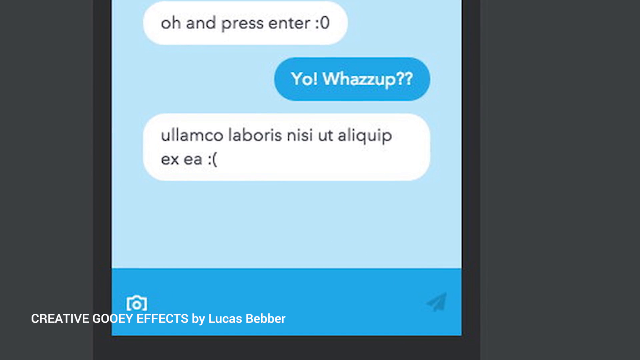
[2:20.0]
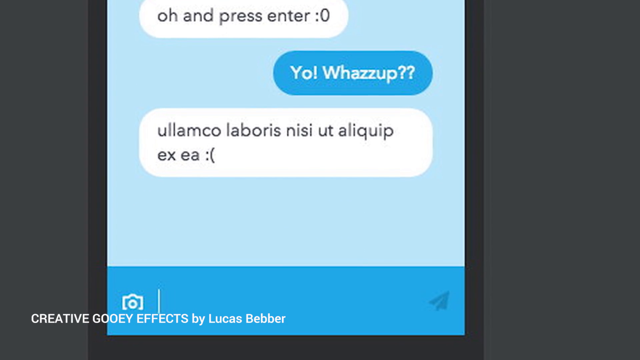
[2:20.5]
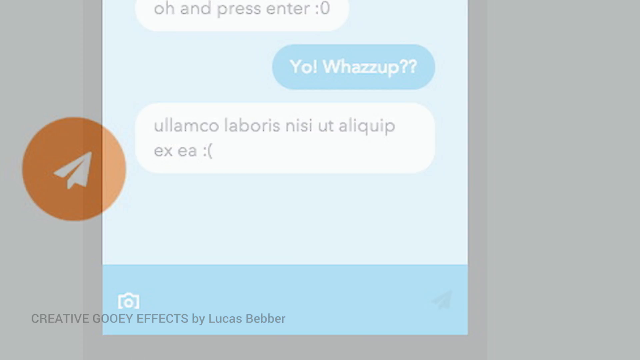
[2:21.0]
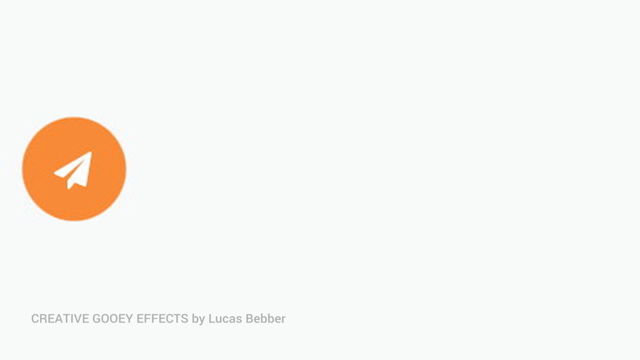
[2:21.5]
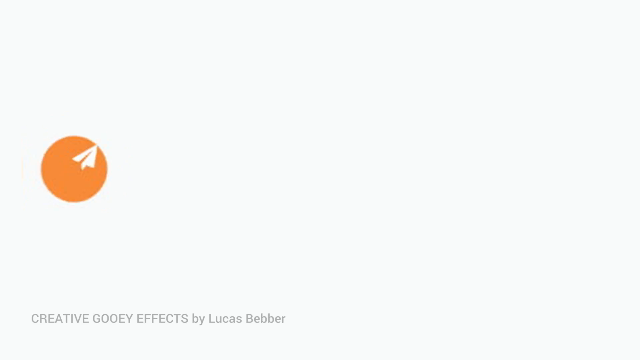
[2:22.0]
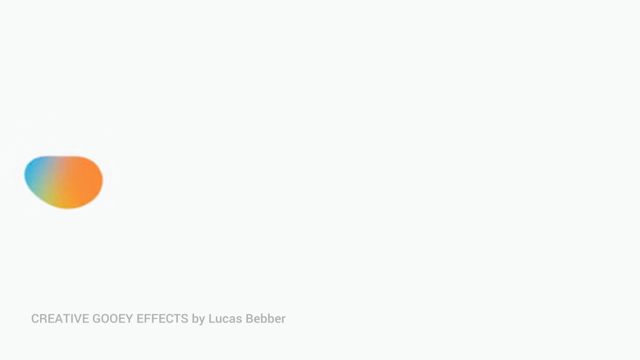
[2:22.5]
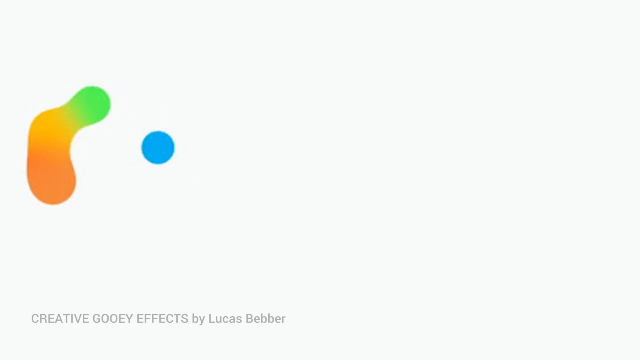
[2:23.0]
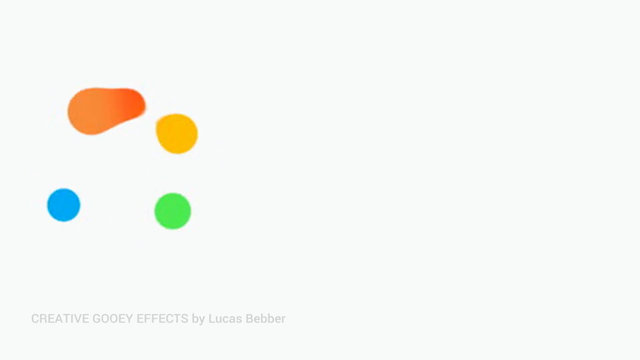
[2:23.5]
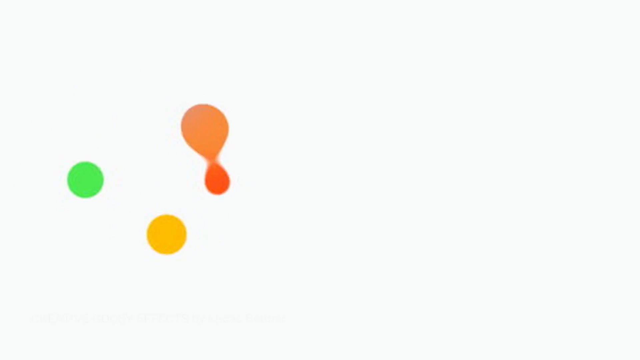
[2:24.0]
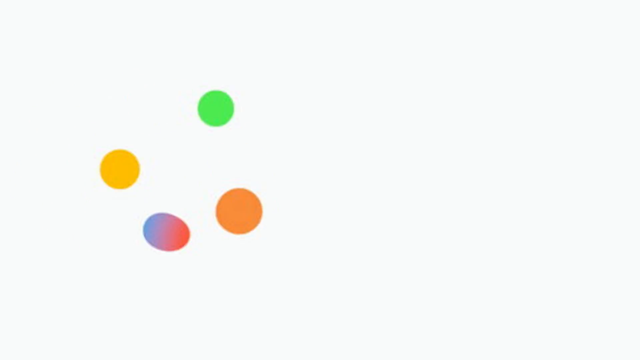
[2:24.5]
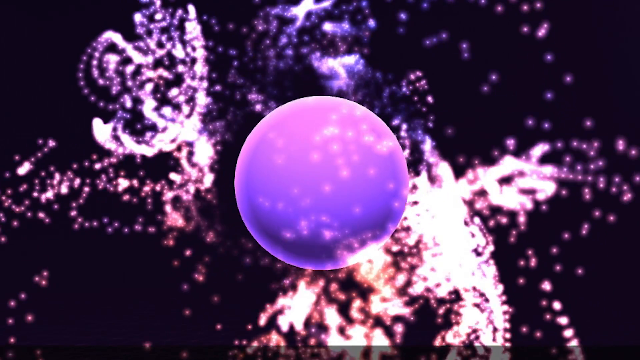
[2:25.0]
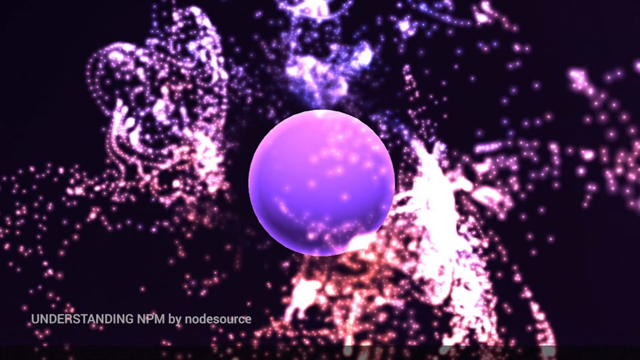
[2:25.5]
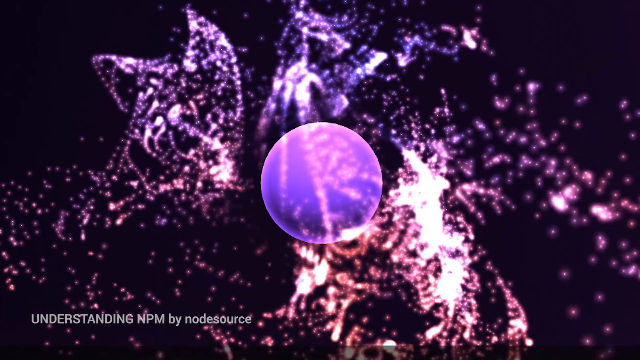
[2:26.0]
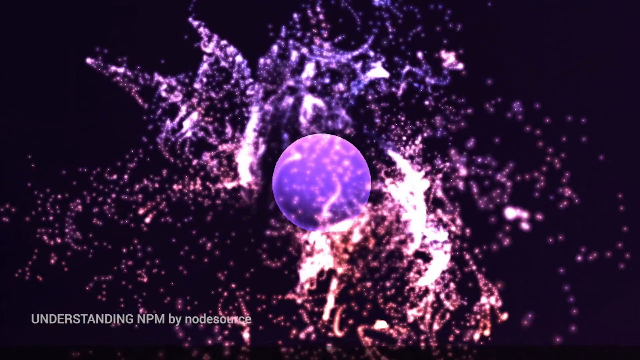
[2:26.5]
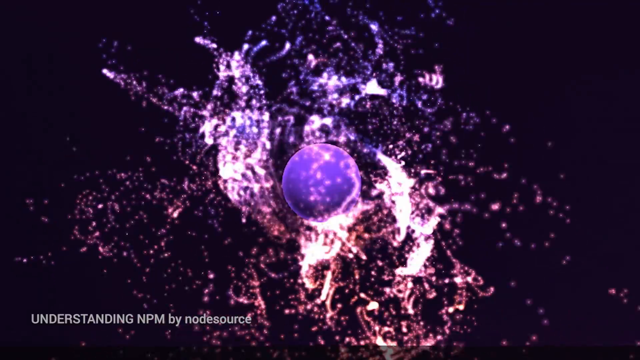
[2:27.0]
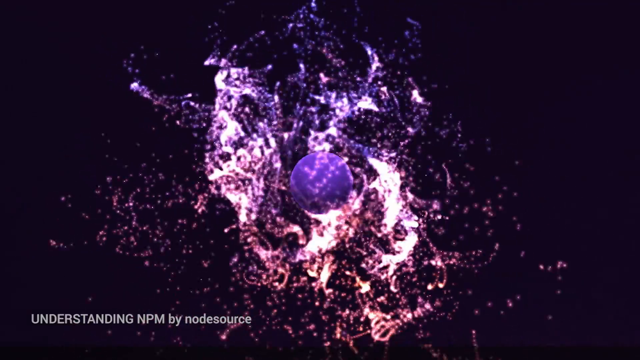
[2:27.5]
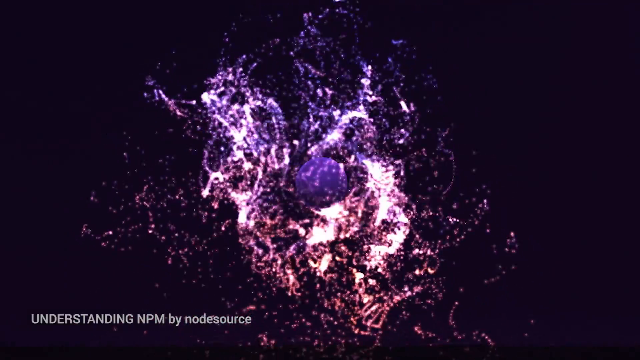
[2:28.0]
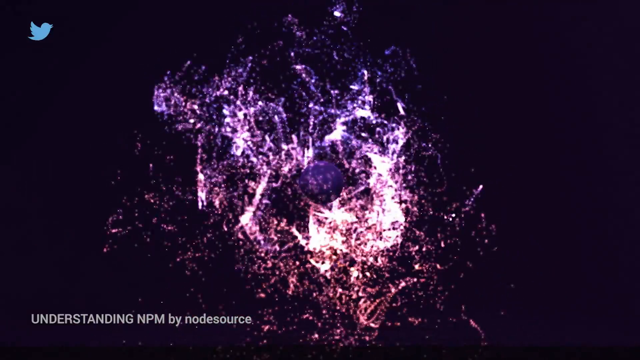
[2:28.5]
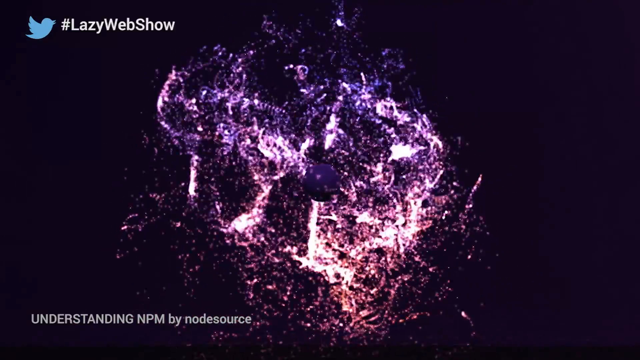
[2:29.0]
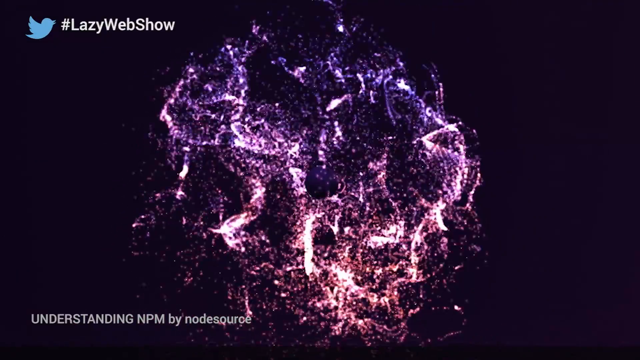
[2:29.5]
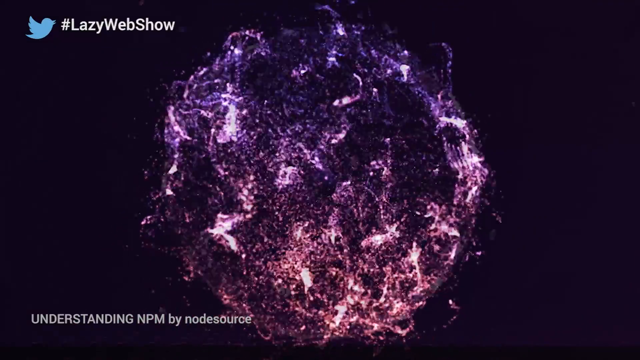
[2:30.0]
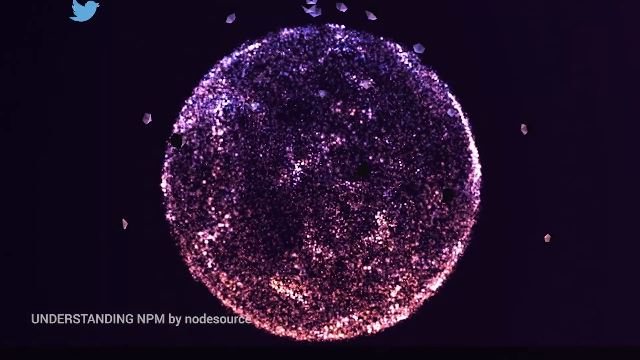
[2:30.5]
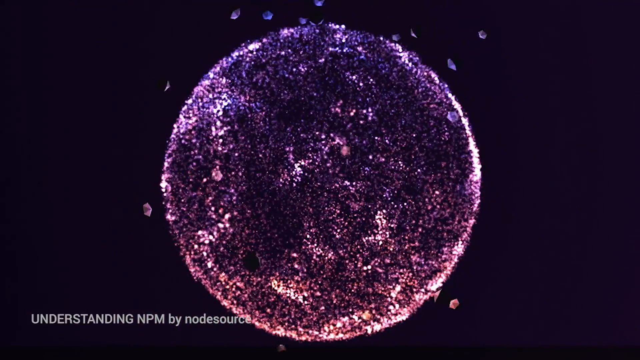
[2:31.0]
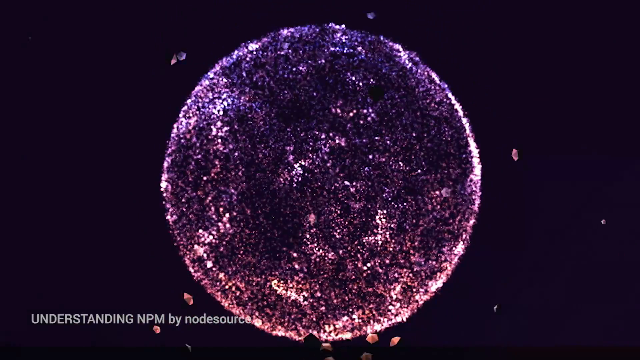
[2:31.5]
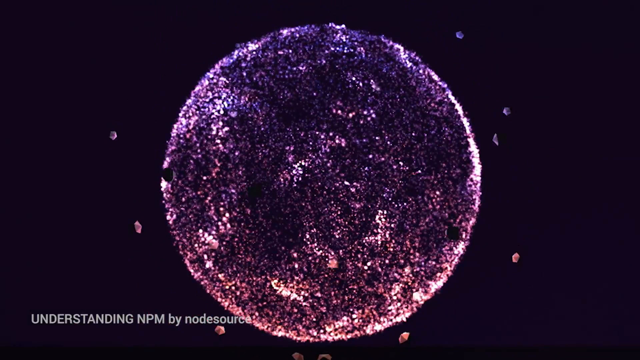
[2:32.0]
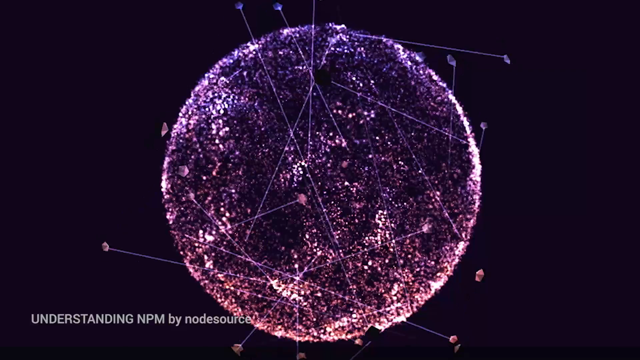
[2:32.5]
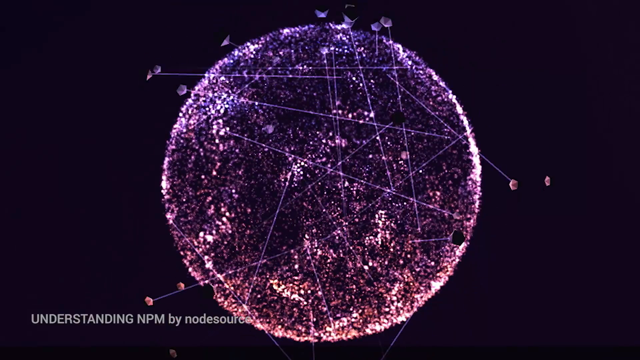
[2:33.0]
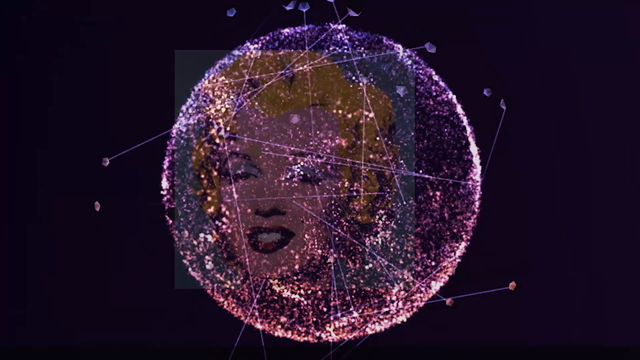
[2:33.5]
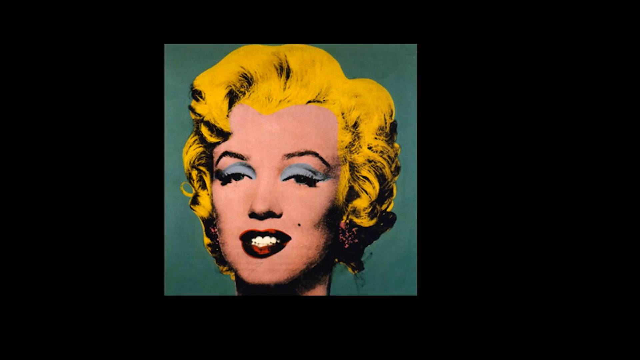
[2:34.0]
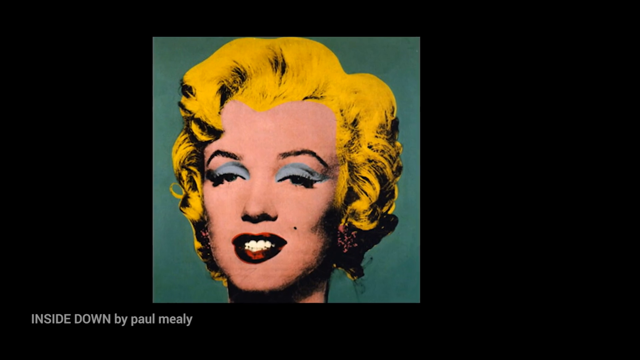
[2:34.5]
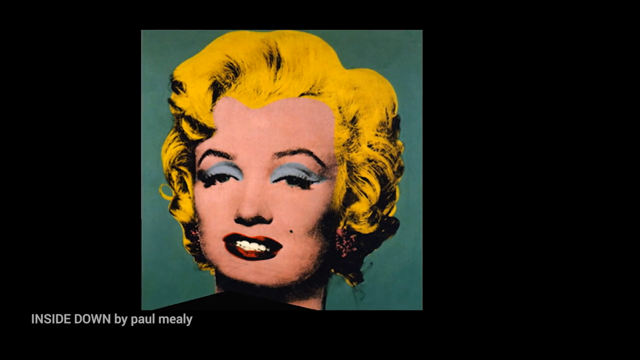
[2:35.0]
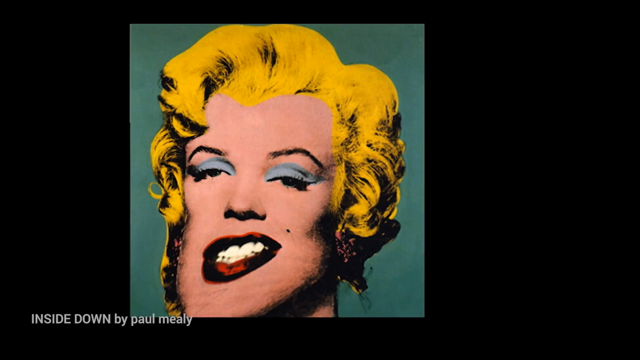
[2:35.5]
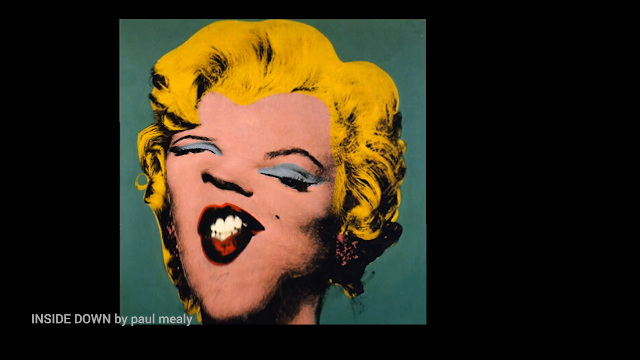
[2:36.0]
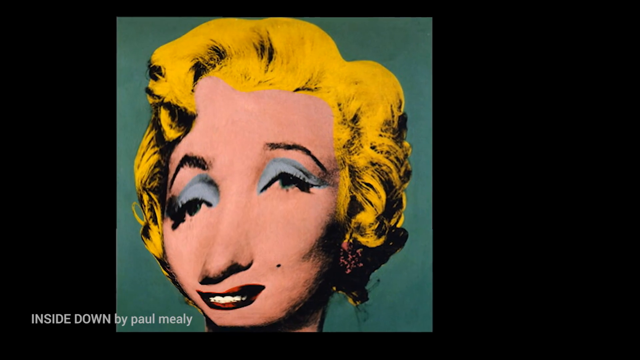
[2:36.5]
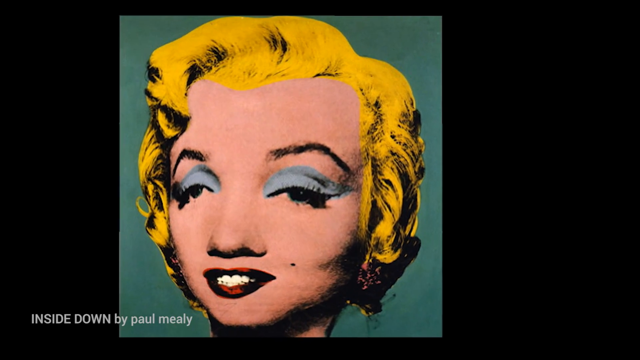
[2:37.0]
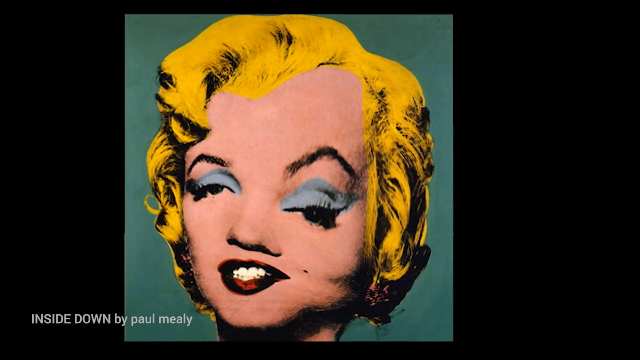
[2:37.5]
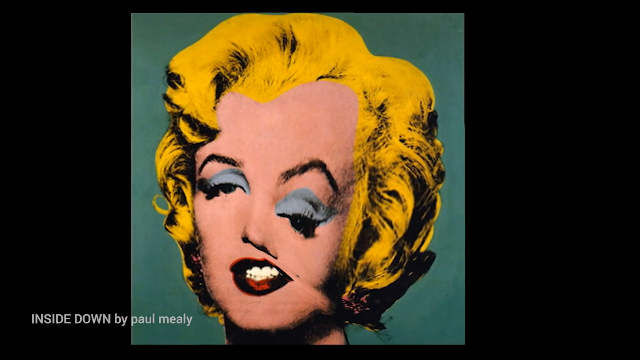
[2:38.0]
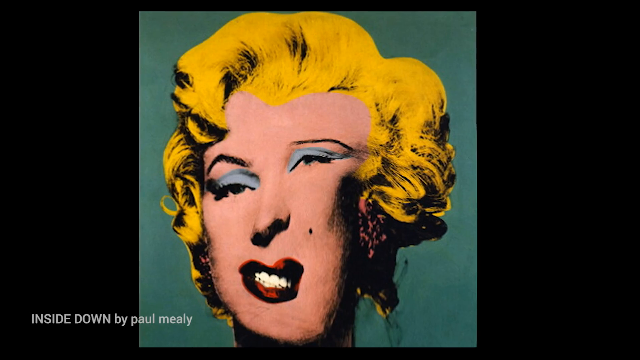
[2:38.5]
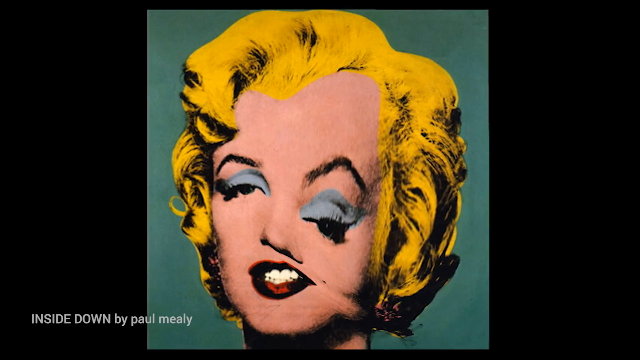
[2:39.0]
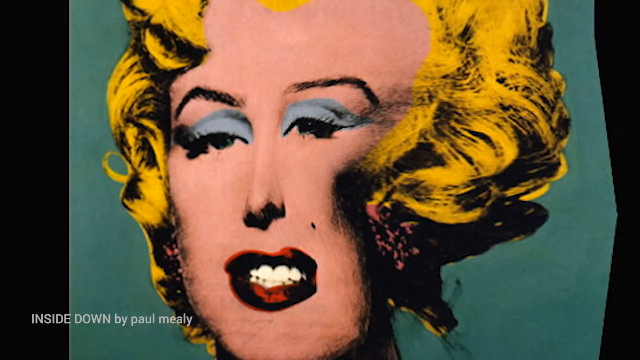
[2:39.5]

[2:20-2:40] A logo begins as a paper airplane that flies around, creating an orange shape that turns into a blue shape, then a yellow shape and a green shape, and these colours chase each other around in a circle. A purple circle appears in the middle of the screen on a purple background with different pieces moving. In the bottom left, "UNDERSTANDING NPM" appears in capital letters, followed in lowercase by "by node source". The purple background fades out. In the top left are the Twitter logo and a hashtag for Lazy Web Show. This all fades, leaving just the purple circle, which is made up of much smaller purple circles, and some moving lines appear over it. Then the Marilyn Monroe painting appears, with "Inside Down by Paul Neely" in the bottom left, as Marilyn Monroe's face is distorted and moves around.